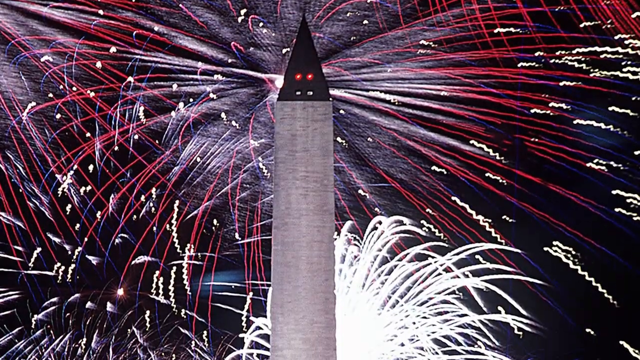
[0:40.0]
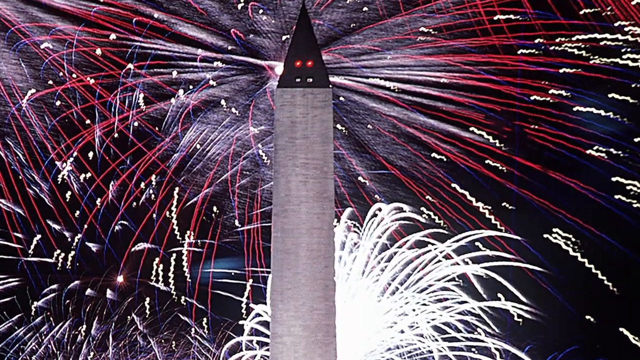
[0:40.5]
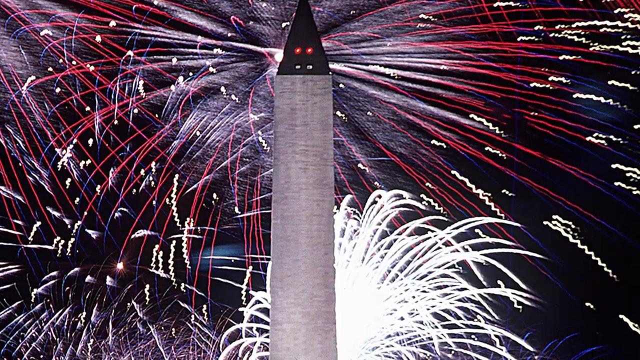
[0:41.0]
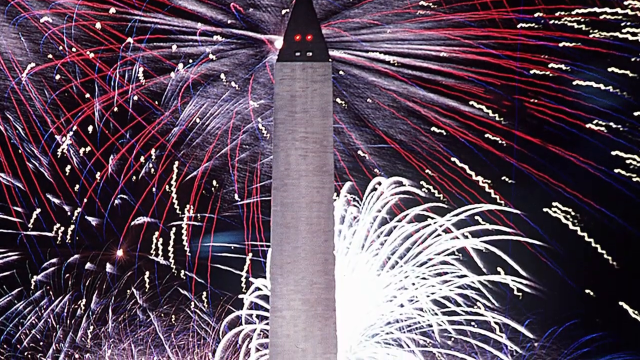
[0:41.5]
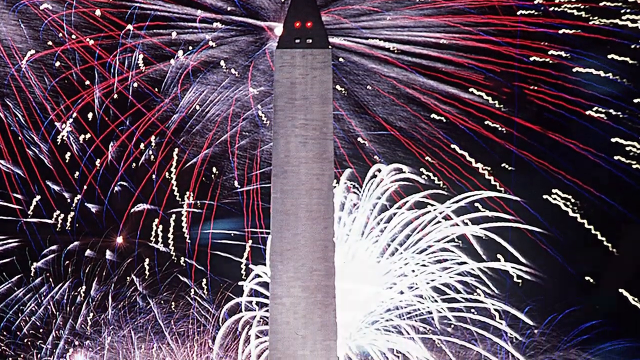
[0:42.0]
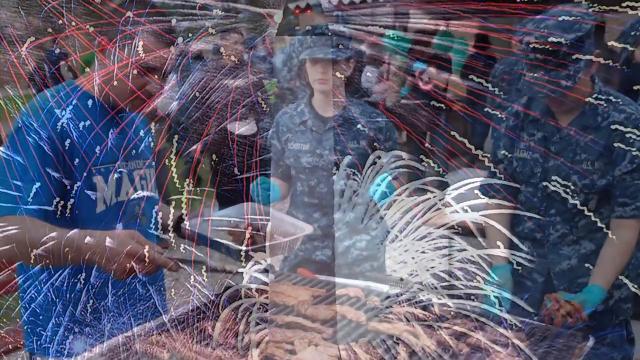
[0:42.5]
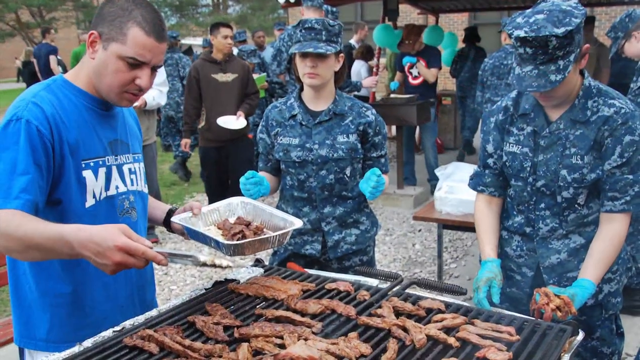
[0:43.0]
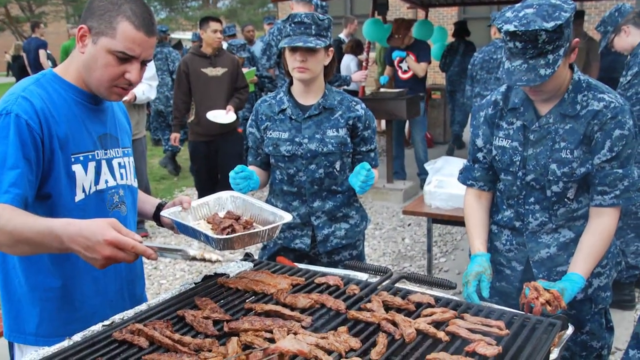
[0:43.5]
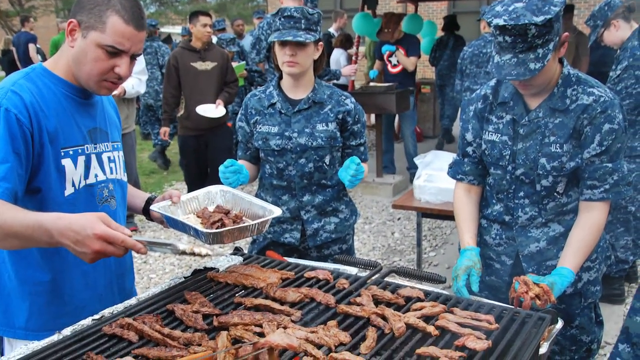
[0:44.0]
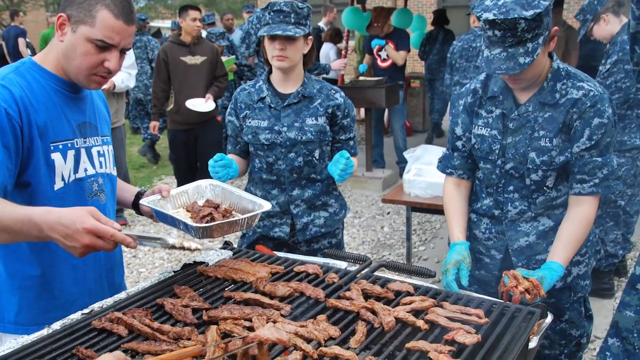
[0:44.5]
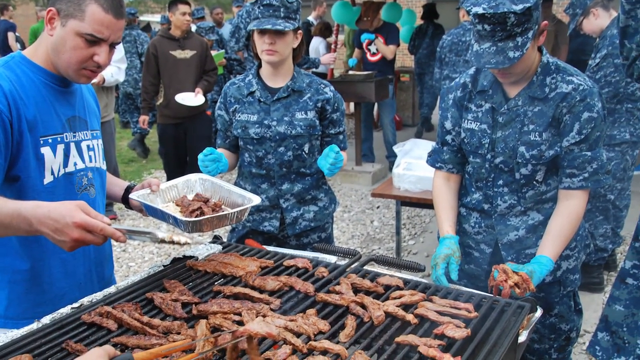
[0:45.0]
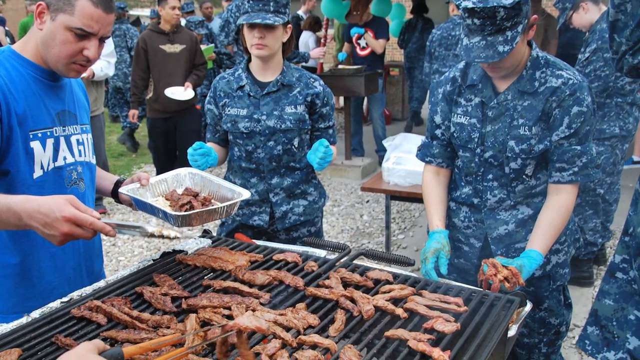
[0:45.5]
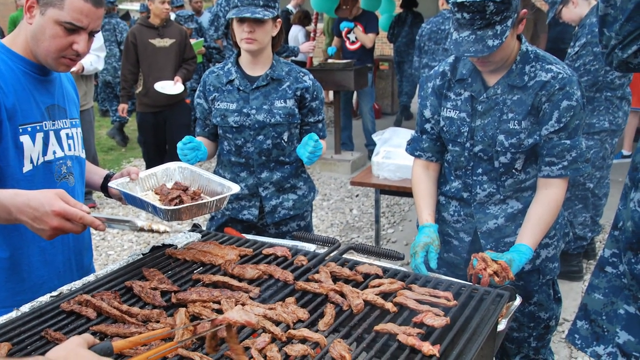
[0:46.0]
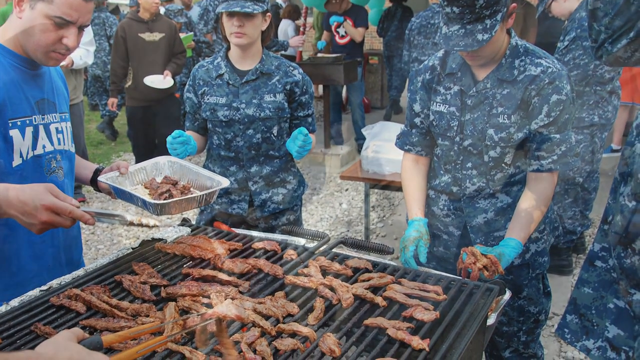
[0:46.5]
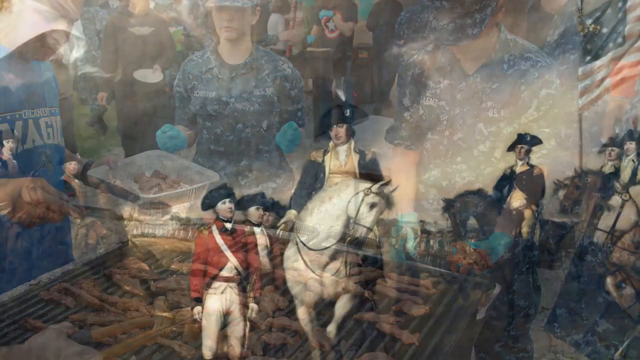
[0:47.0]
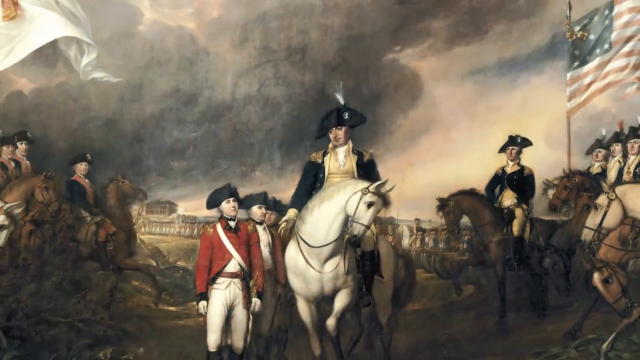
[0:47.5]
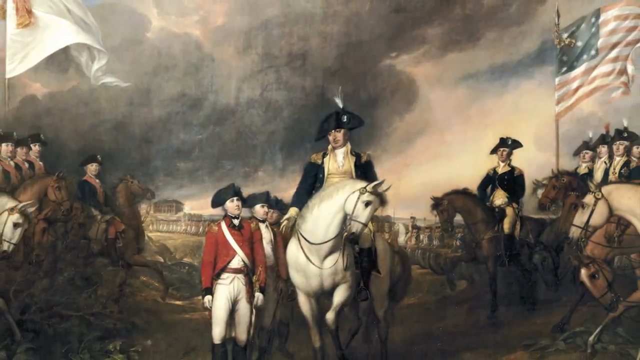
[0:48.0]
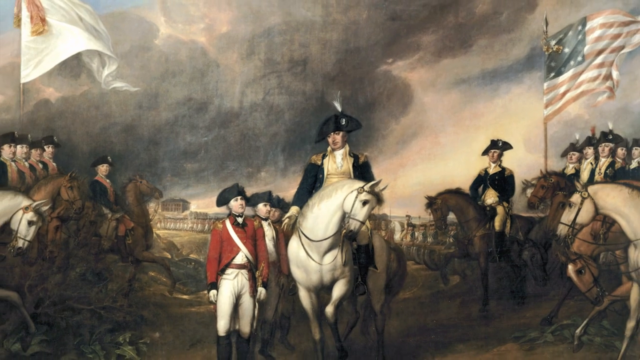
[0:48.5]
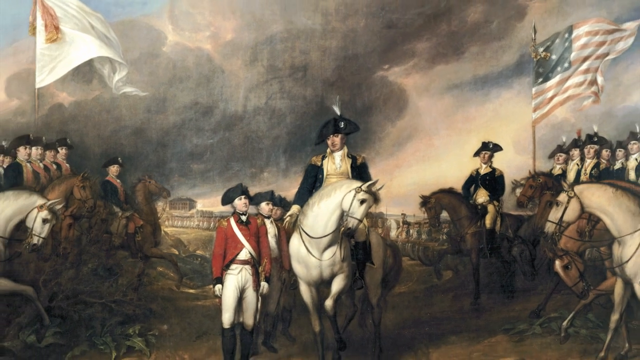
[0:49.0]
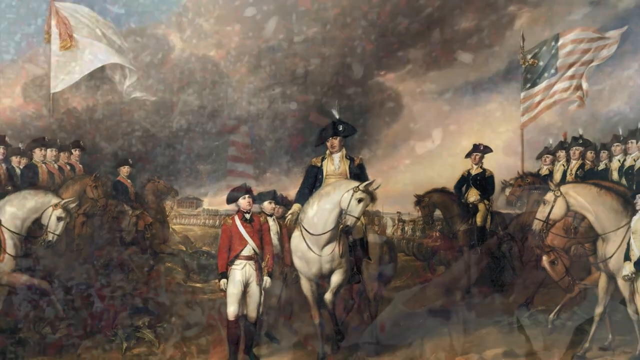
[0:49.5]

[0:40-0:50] A celebratory photo shows the Washington Monument, the obelisk in D.C., with white and red fireworks behind it, as the camera scans from top to bottom. The video transitions to a photo of what is apparently an outdoor barbecue sponsored by the U.S. Navy. Navy servicemen and women wear Navy camouflage uniforms, hats included. A man in a blue t-shirt holds a metal tray with meat in his left hand, has a black watch on his left wrist, and holds a pair of metal tongs in his right hand; he looks like he is trying to pick up some meat from the extra-large grill. Two servicemembers are ready to assist. The one closer to the man holding the tray is a woman wearing blue plastic gloves. Beside her, on her left and on the right side of the picture, is another serviceman, also wearing blue plastic gloves, with a handful of meat in his left hand; he looks like he is about to pick up more meat with his right hand. The camera scans from left to right. Next is another picture from the War of Independence that seems to show the British surrender. The video focuses on the center, scans back, and transitions to another celebratory scene.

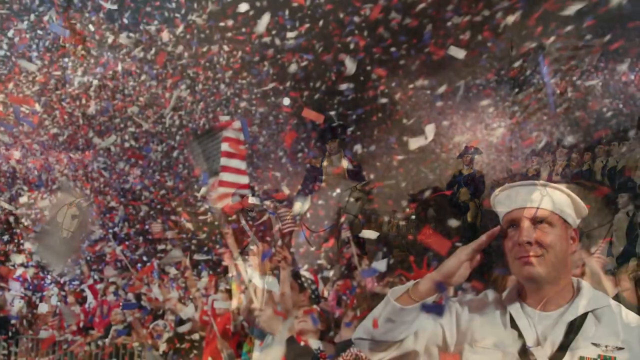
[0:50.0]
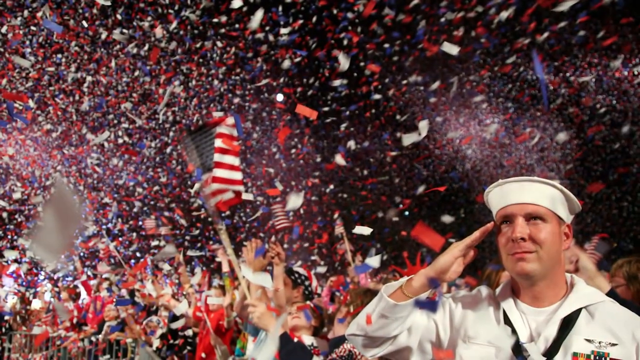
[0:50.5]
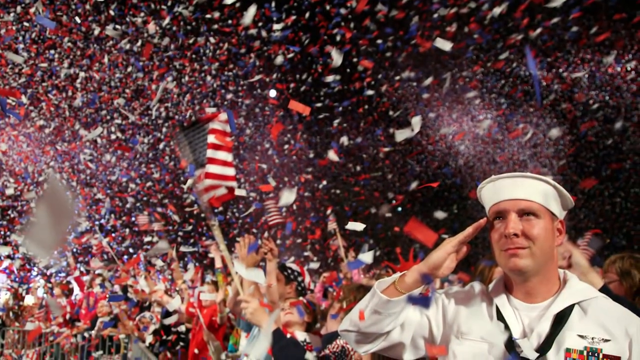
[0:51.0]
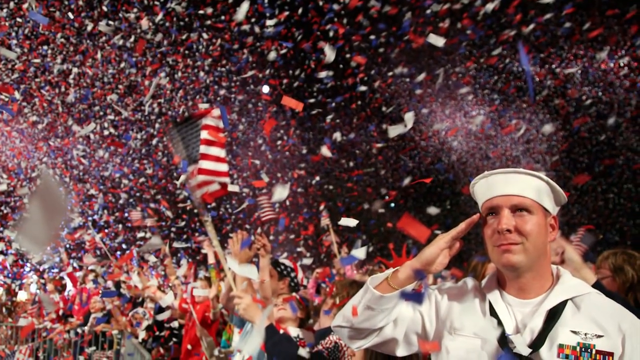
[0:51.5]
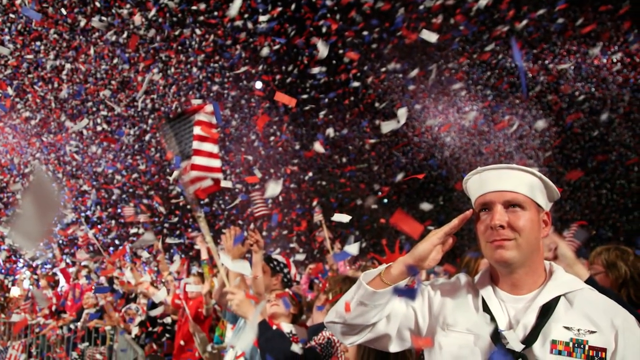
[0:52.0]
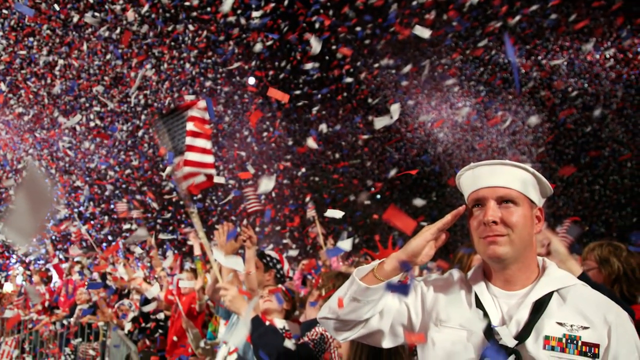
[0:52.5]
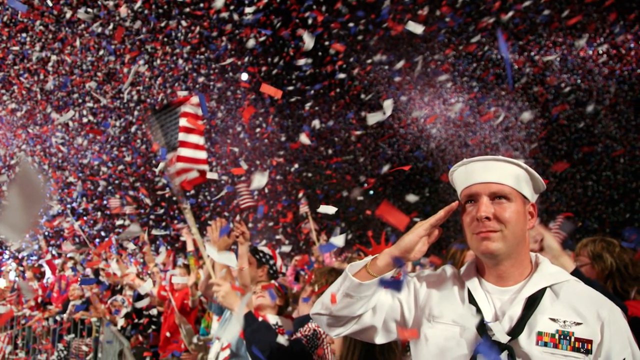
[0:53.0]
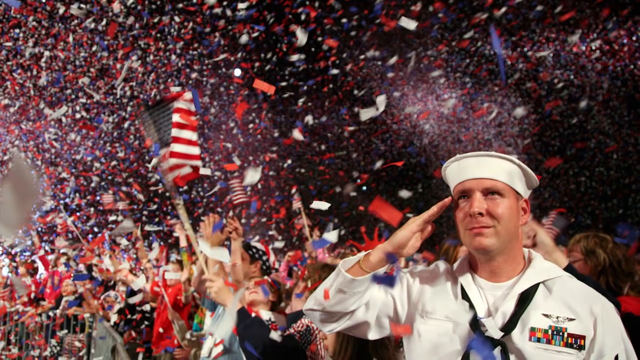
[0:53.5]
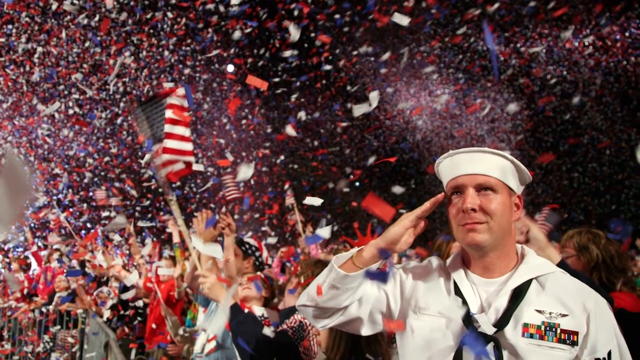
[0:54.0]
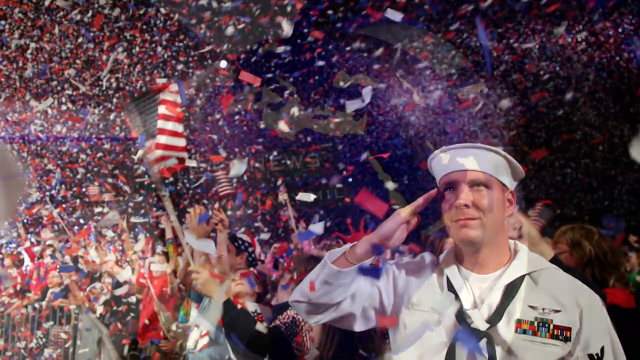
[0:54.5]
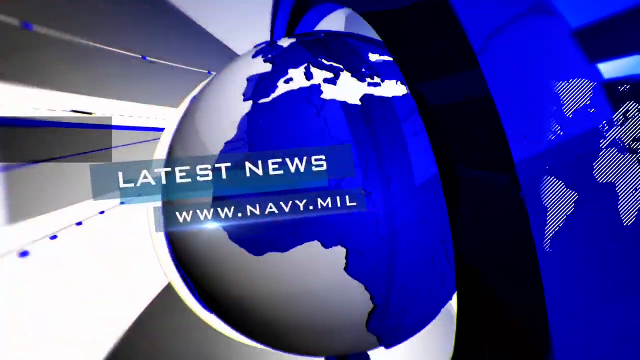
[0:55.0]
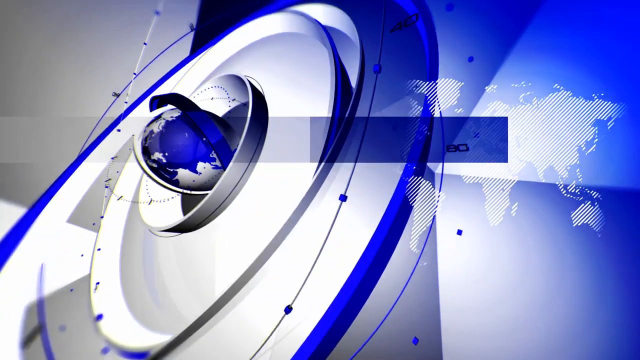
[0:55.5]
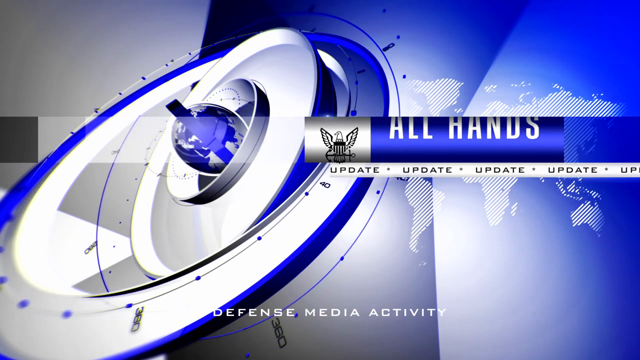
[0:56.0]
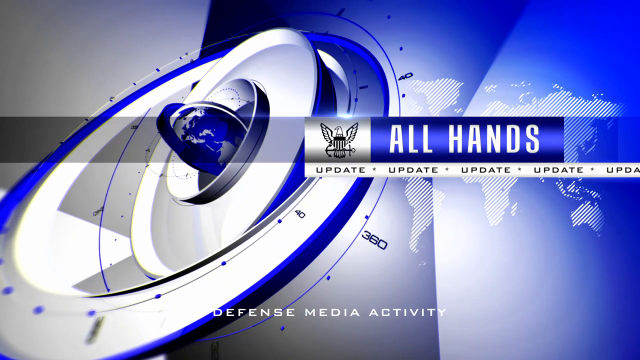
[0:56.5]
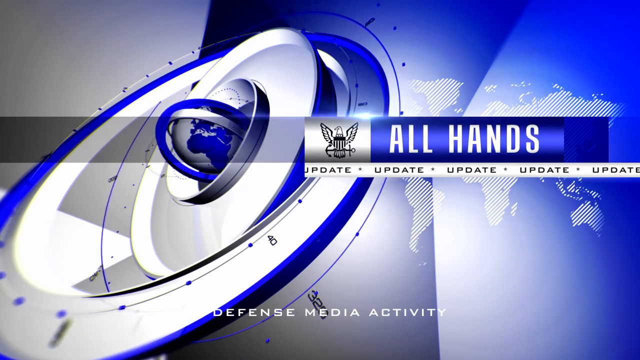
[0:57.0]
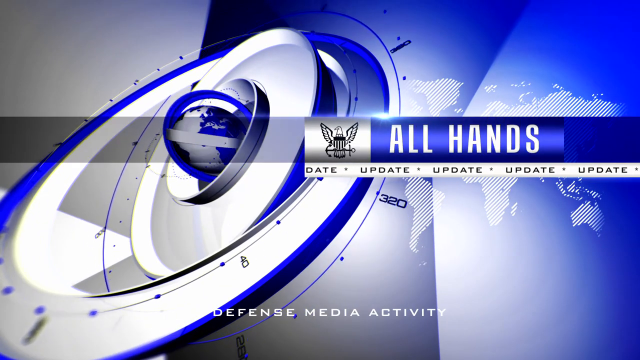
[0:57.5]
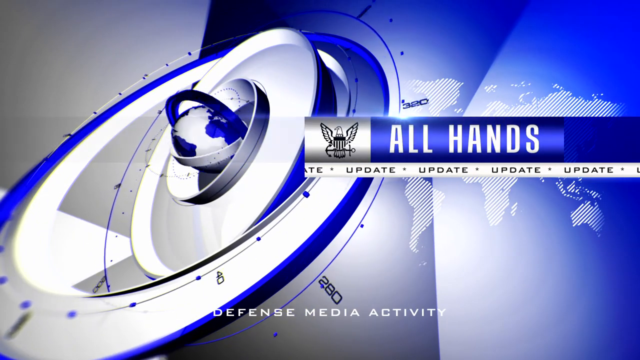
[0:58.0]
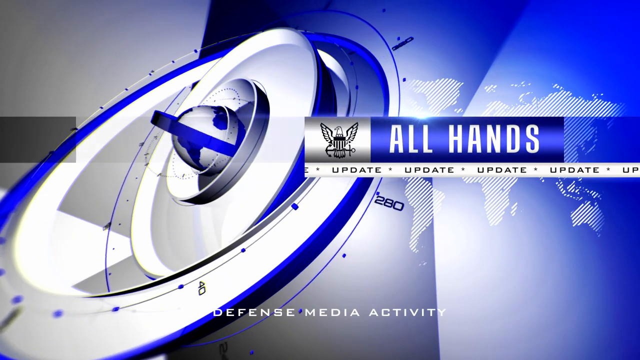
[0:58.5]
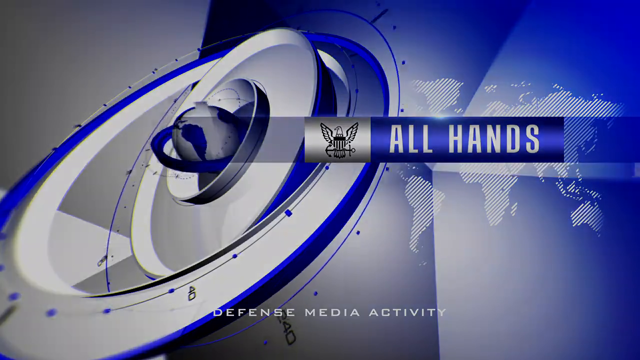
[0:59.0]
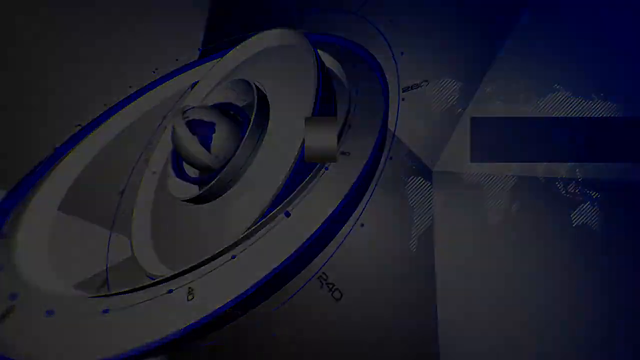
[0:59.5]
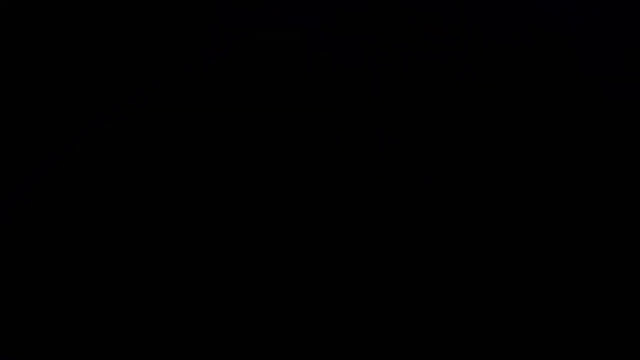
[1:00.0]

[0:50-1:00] A celebratory scene, possibly the 4th of July, takes place at night, with white, red and blue confetti covering the sky and American flags waving. At the bottom right, a Navy serviceman in a white uniform, with a black bandana wrapped around his neck, raises his right hand in salute. The scene then transitions back to a news-style scene in the same blue, black, white and gray color scheme, with a spinning globe in the center, the words "latest news" in white letters, and "www.navy.mil" underneath.